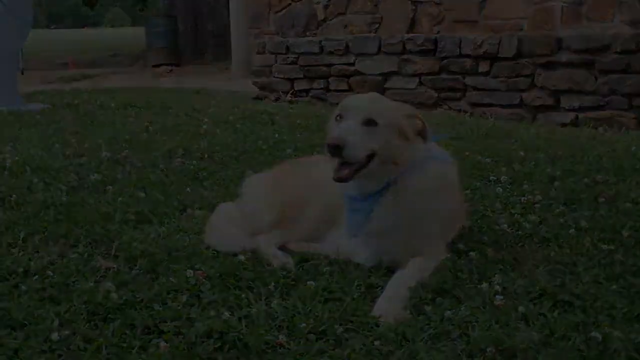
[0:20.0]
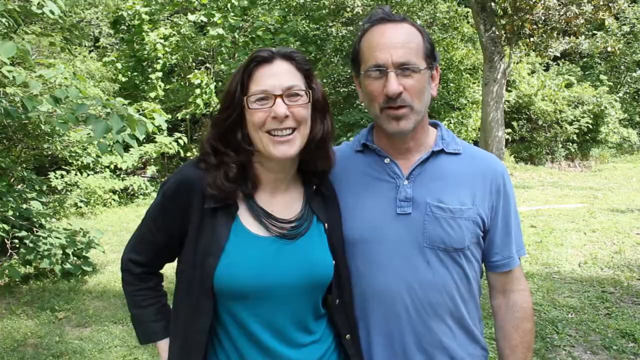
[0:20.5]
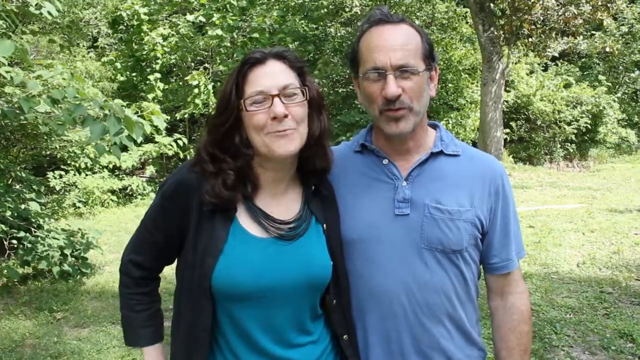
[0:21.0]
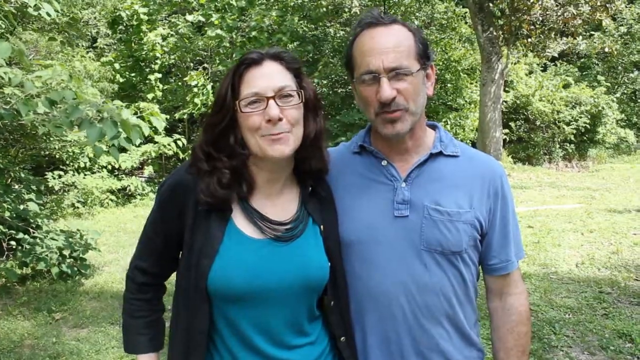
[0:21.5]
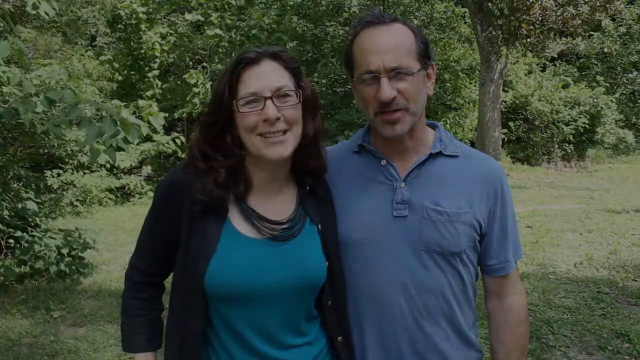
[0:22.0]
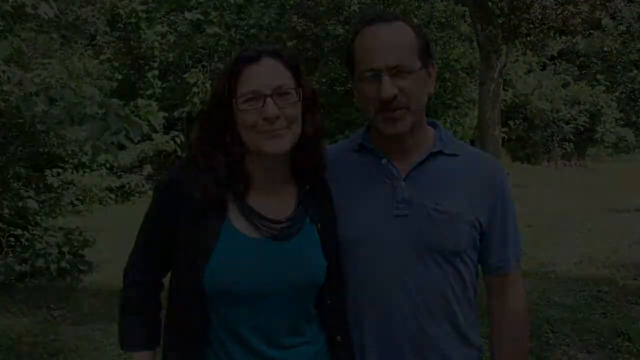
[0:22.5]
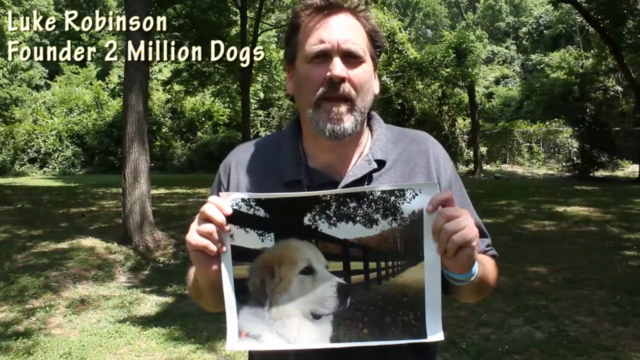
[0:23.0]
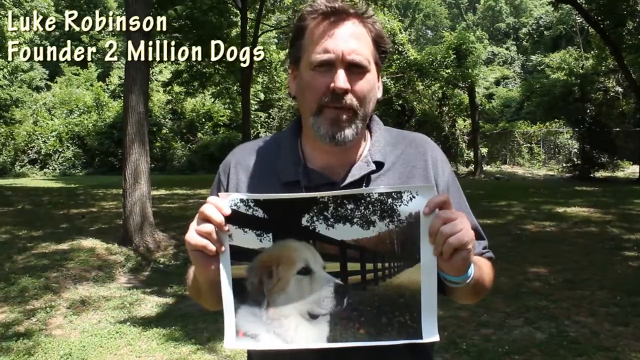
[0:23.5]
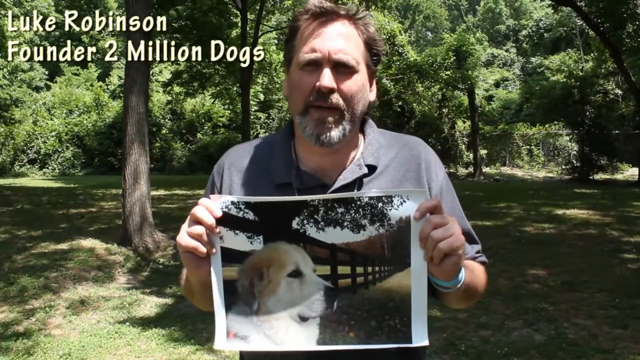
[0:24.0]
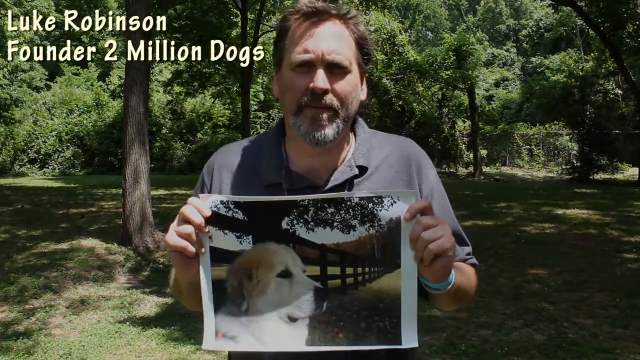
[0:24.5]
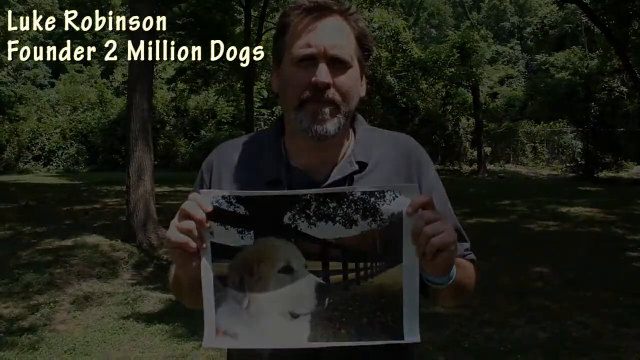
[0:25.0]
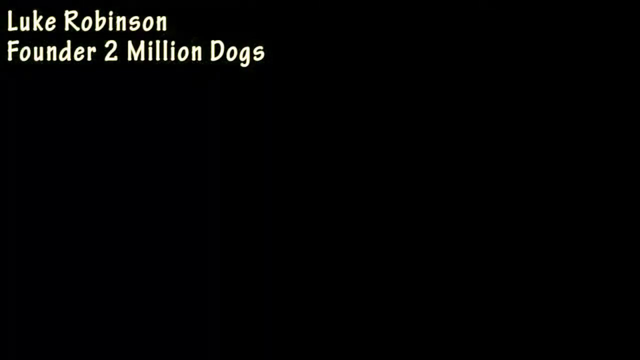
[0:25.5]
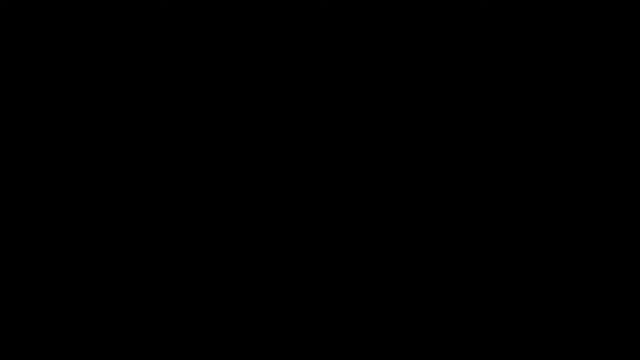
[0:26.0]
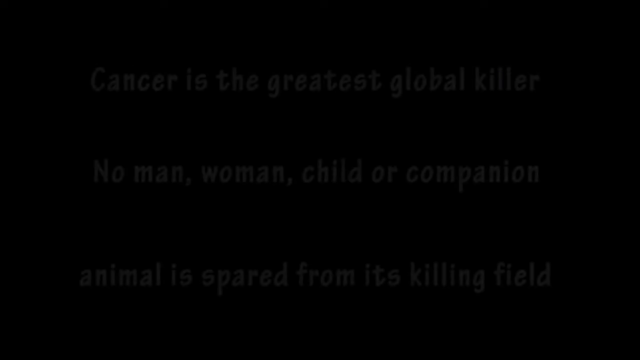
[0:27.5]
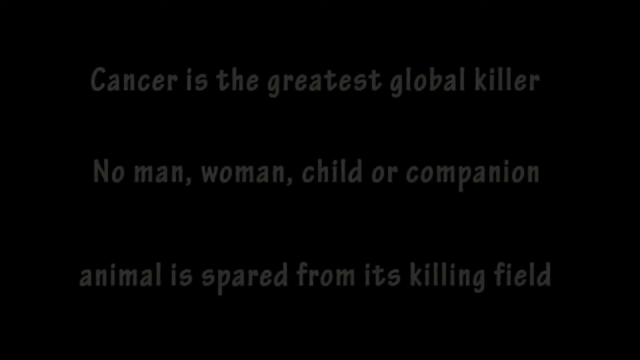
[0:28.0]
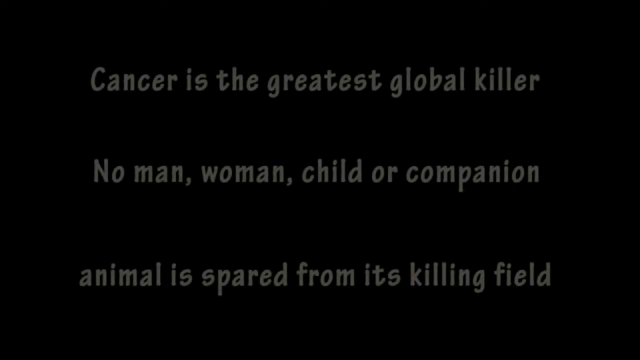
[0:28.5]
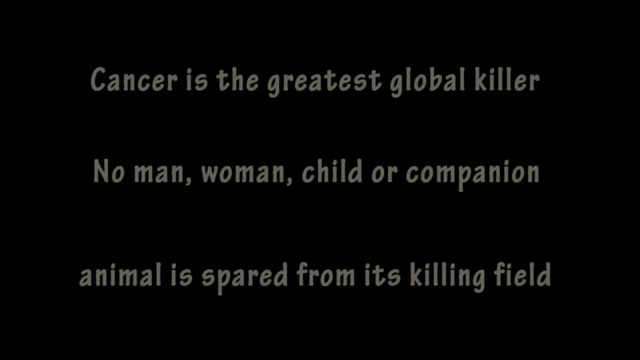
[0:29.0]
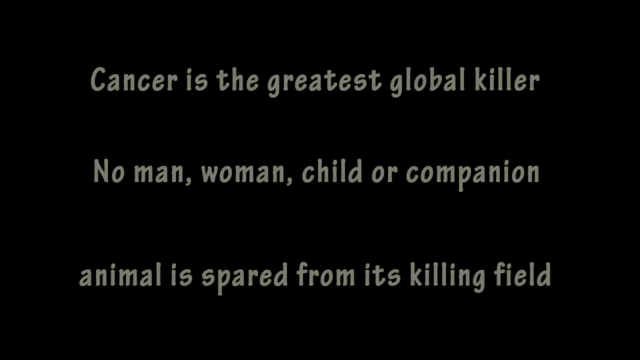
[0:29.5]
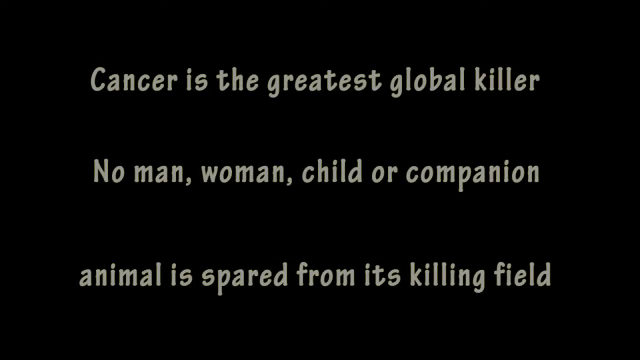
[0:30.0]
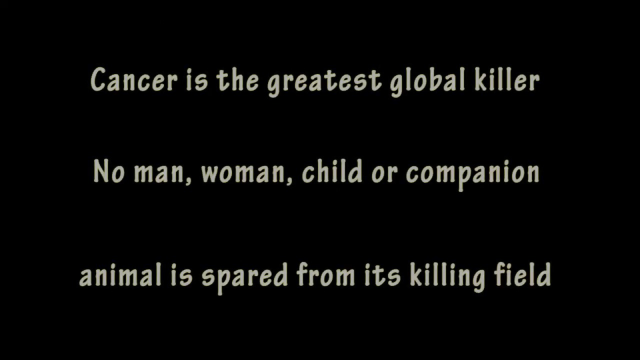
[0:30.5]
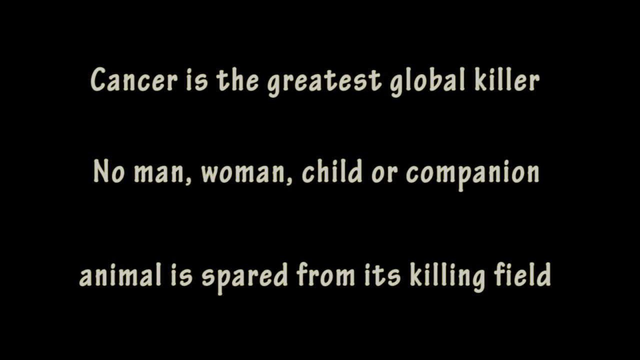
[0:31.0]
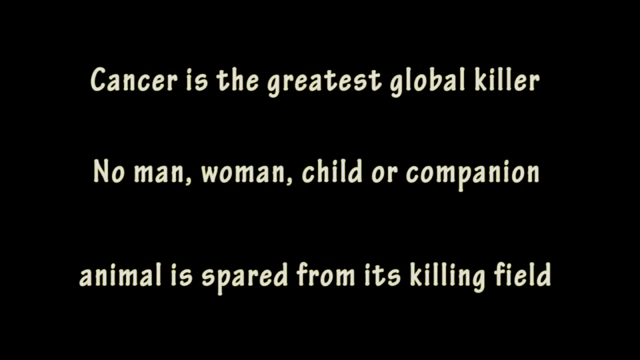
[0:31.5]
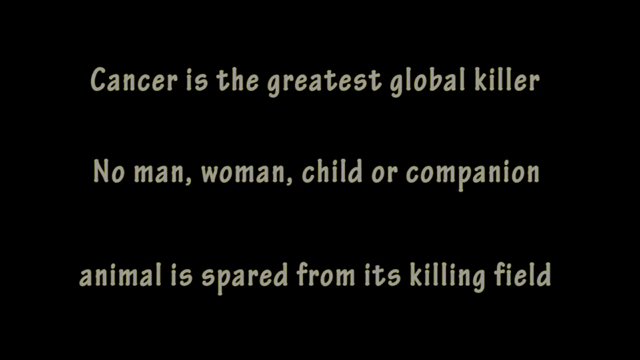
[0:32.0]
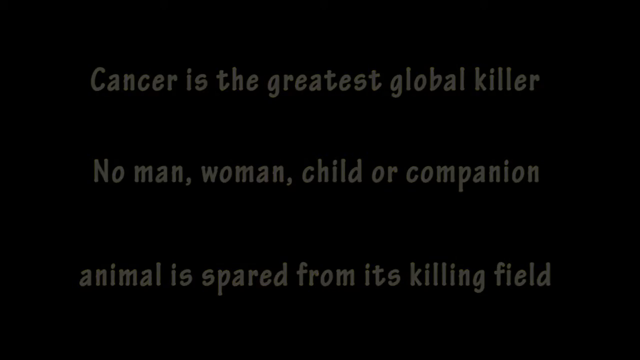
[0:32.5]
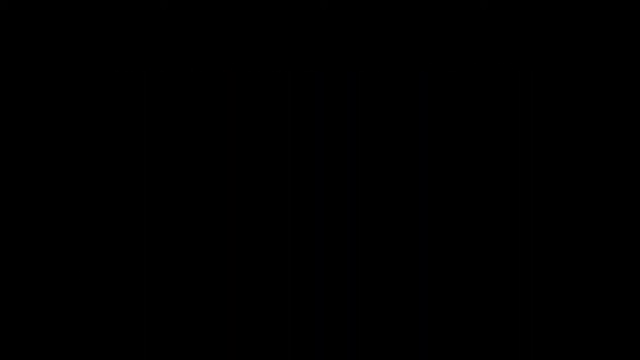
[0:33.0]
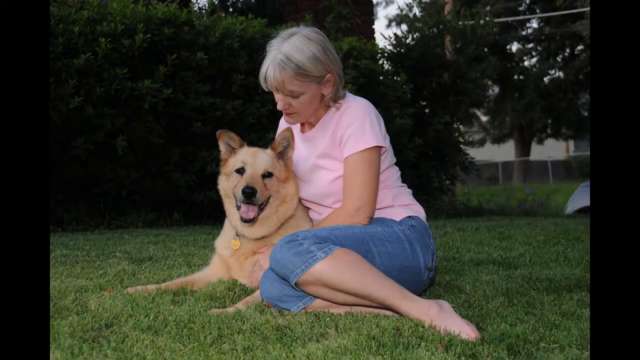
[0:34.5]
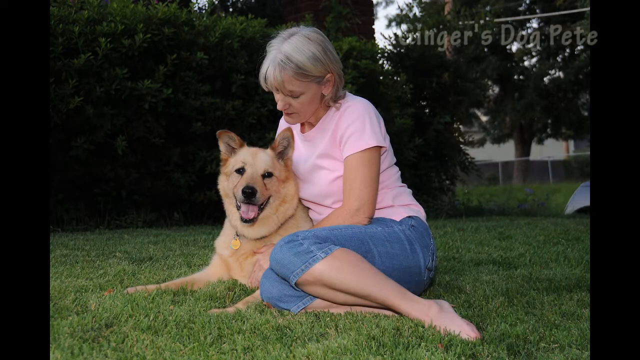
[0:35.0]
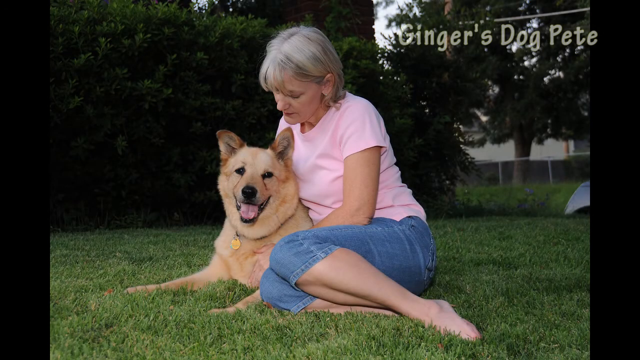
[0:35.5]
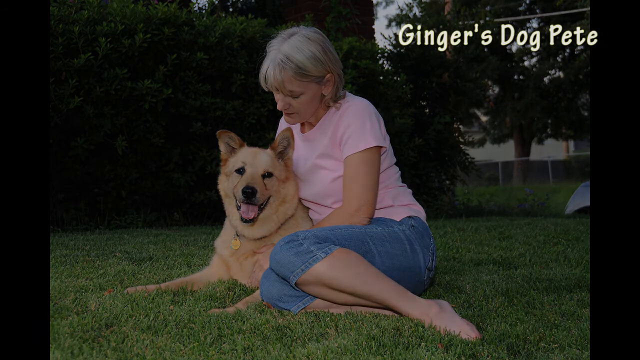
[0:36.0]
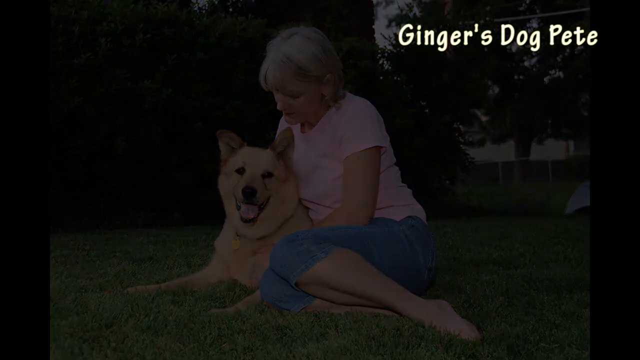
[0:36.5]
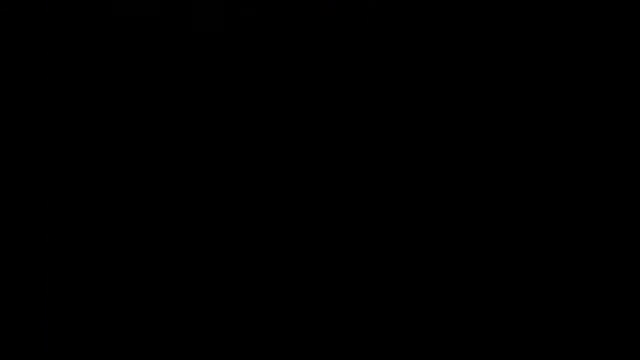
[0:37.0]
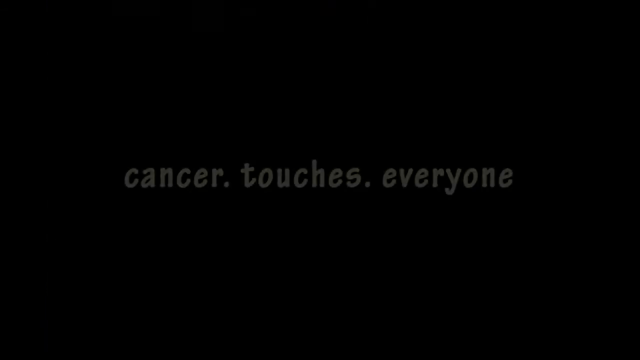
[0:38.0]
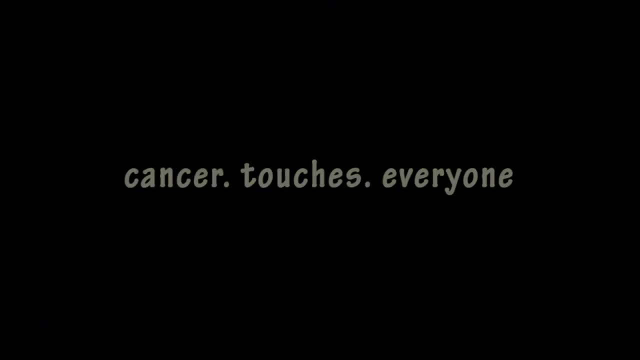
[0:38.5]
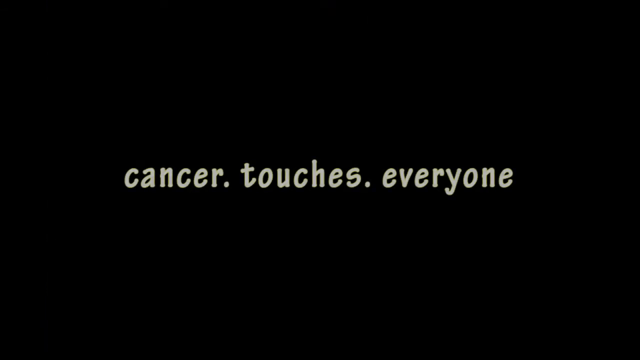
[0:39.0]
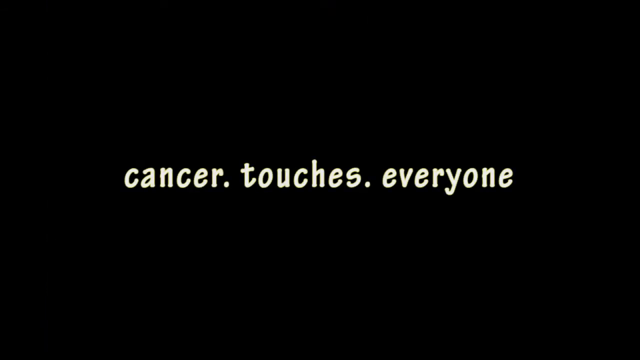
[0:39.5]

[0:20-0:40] Text states that cancer affects not only humans but pets as well. Luke Rubison, founder of two million dogs, stands holding a poster of a white dog. Behind him are a forest with many trees and greenery, and a green, well-kept lawn. He wears bracelets on his left hand and a blue collared shirt, has a beard and brownish hair, and appears to be in his late 50s.